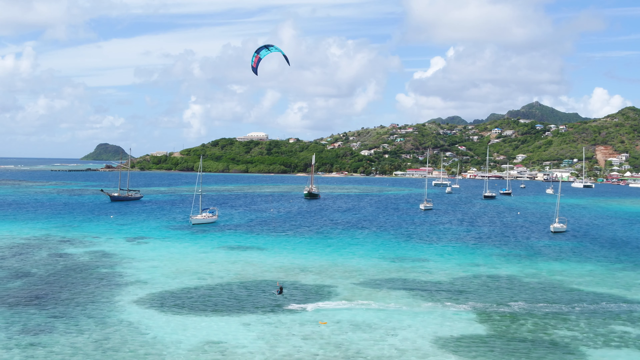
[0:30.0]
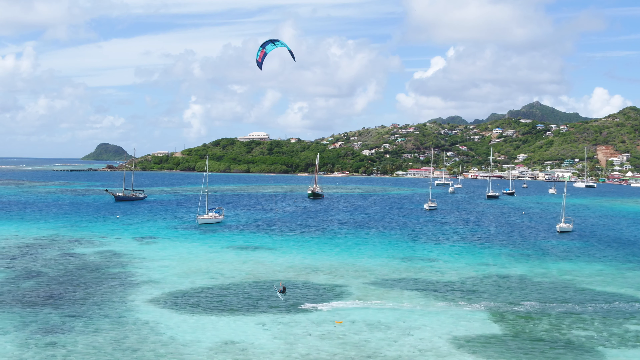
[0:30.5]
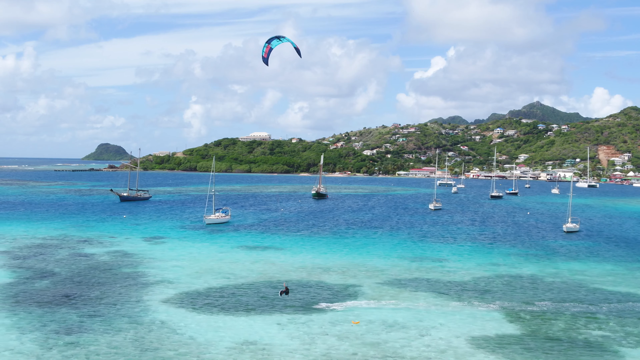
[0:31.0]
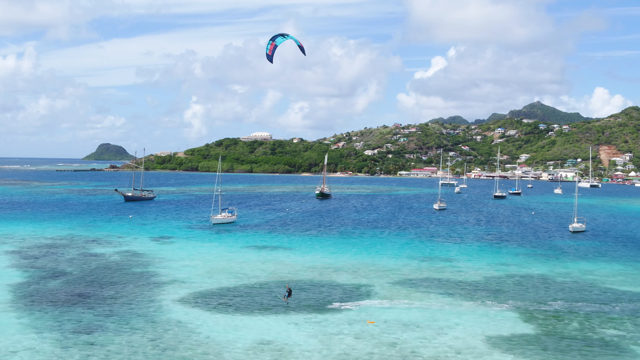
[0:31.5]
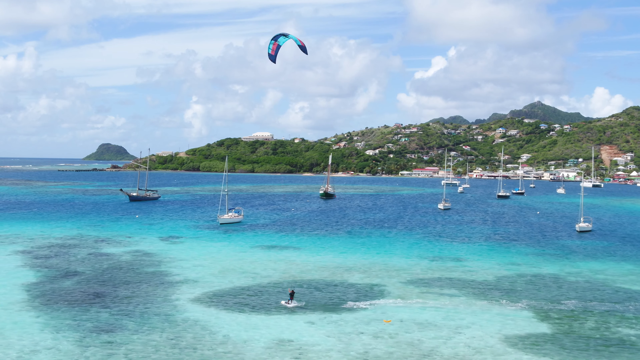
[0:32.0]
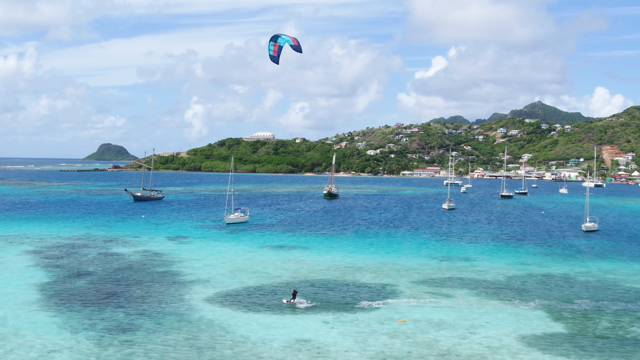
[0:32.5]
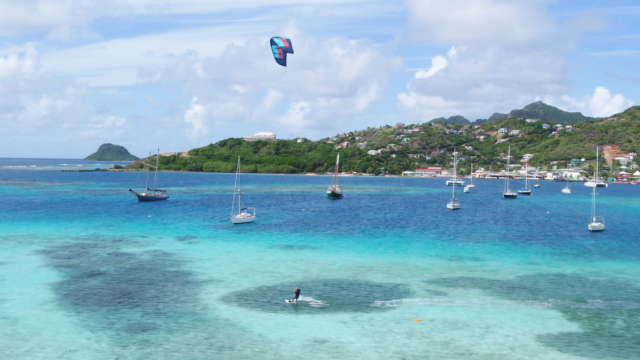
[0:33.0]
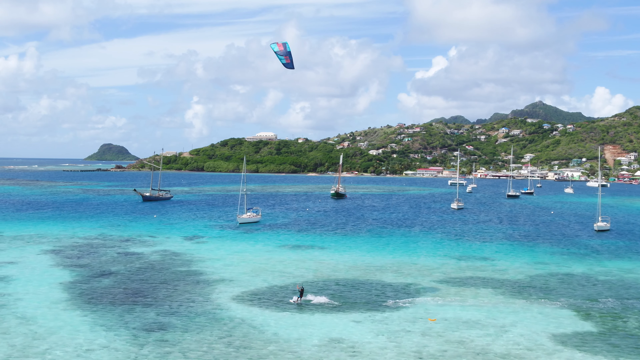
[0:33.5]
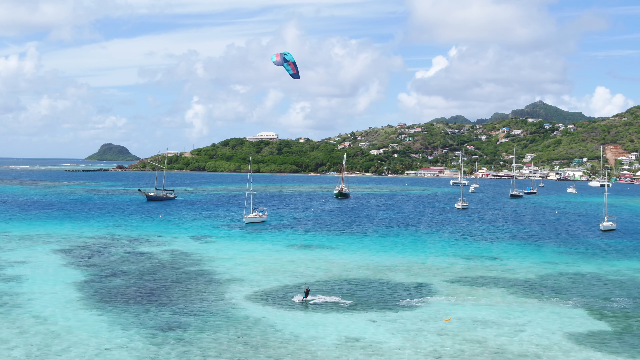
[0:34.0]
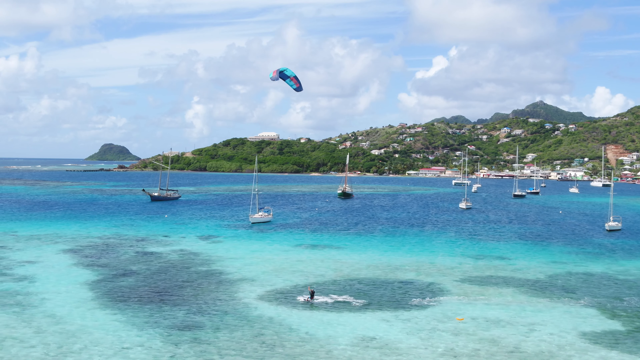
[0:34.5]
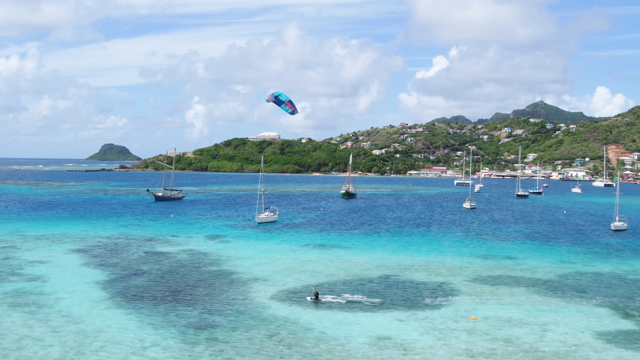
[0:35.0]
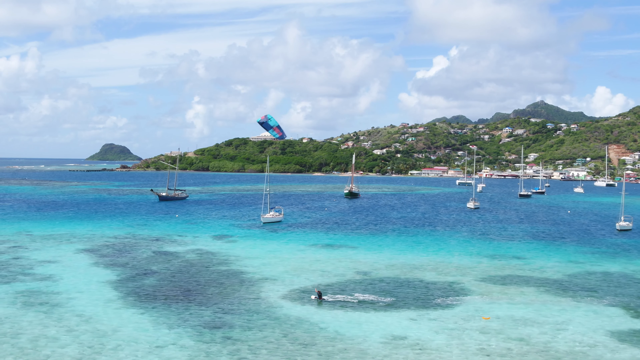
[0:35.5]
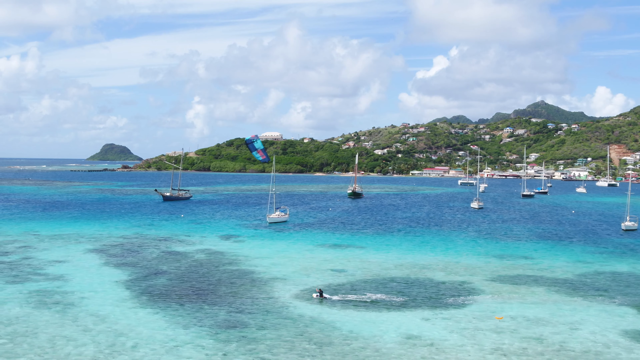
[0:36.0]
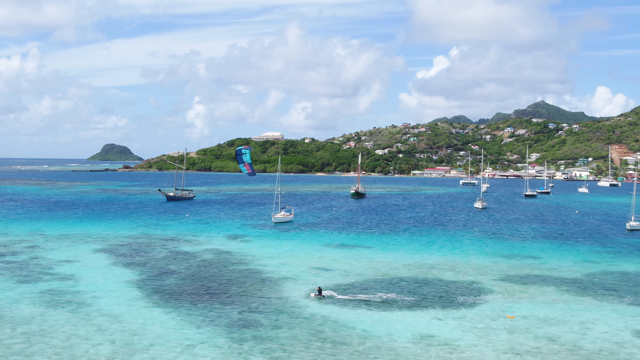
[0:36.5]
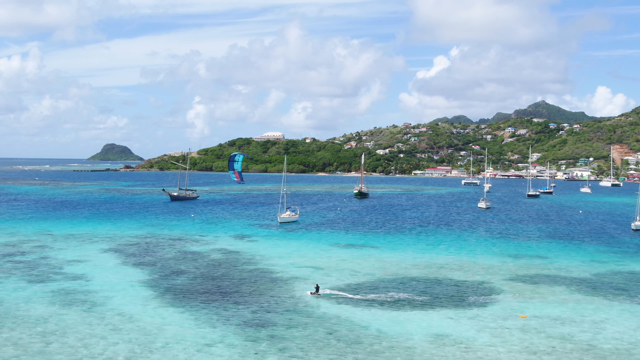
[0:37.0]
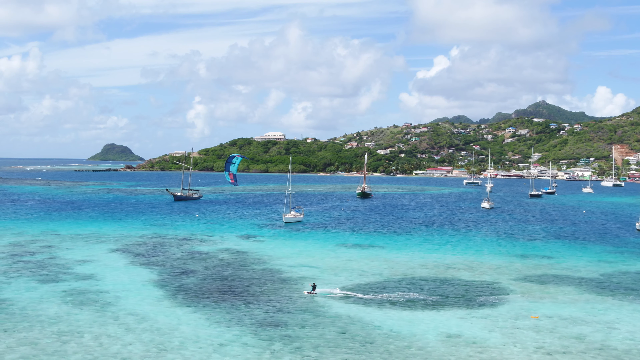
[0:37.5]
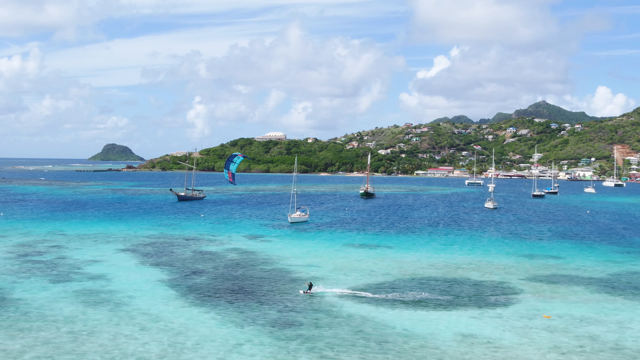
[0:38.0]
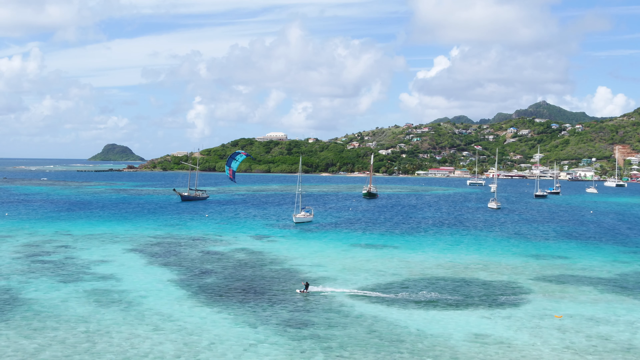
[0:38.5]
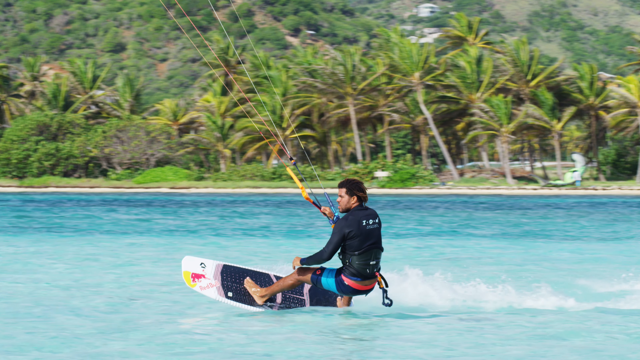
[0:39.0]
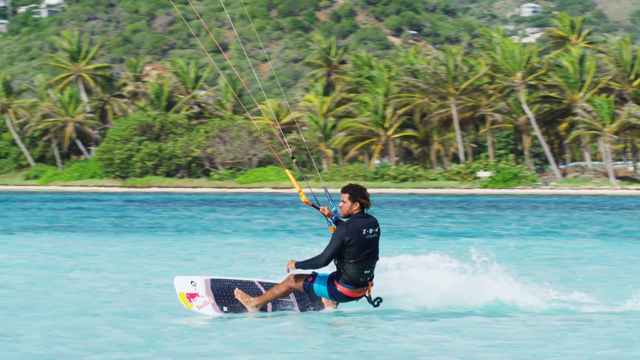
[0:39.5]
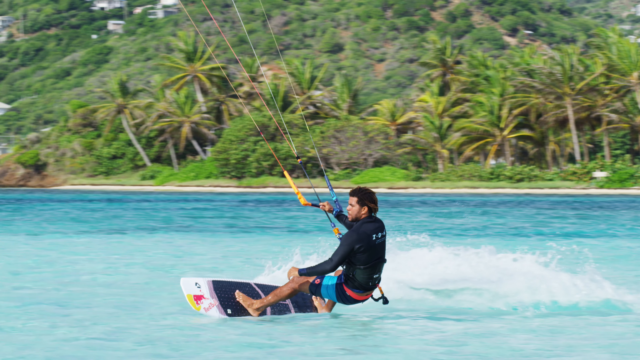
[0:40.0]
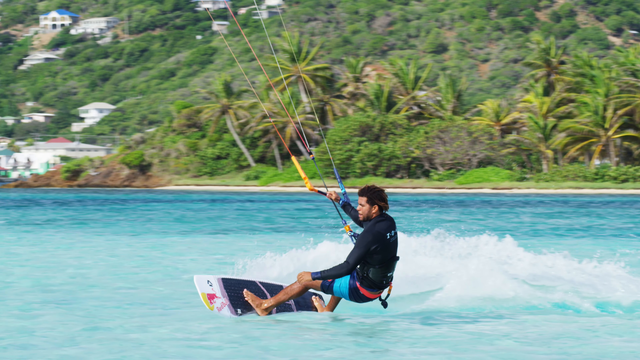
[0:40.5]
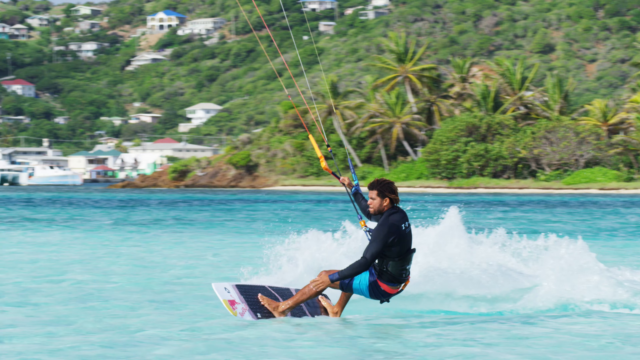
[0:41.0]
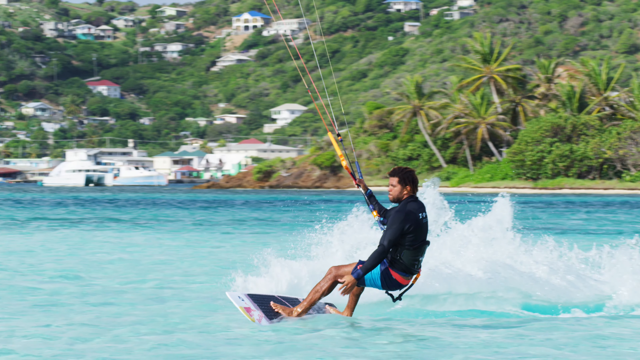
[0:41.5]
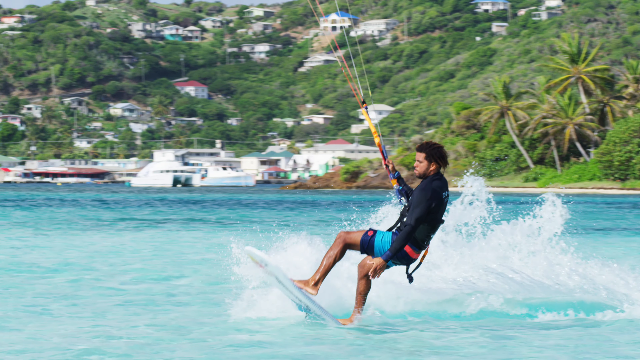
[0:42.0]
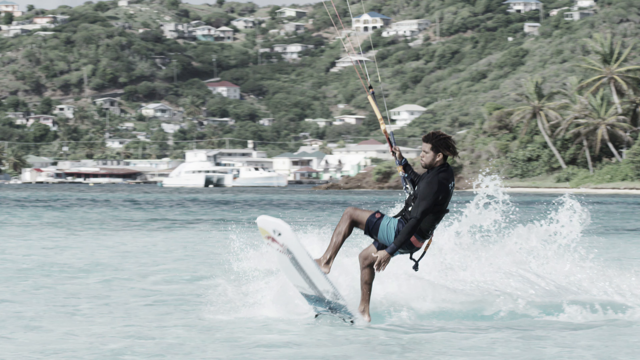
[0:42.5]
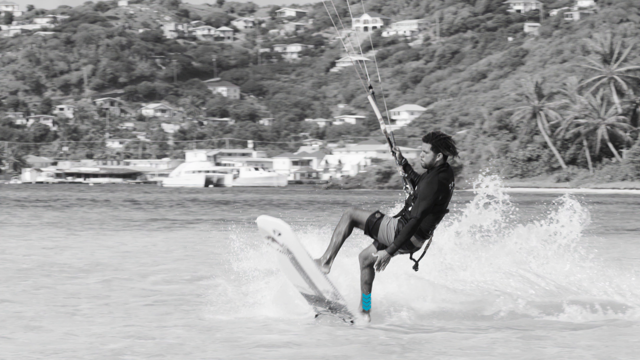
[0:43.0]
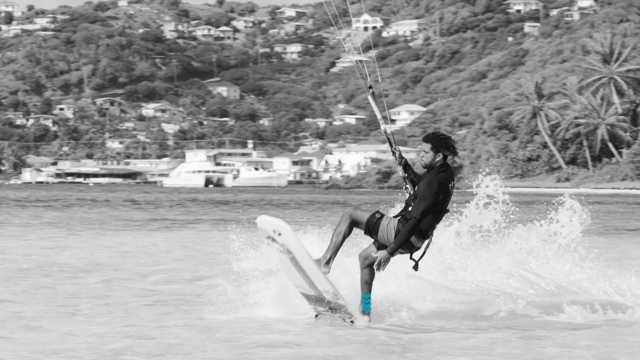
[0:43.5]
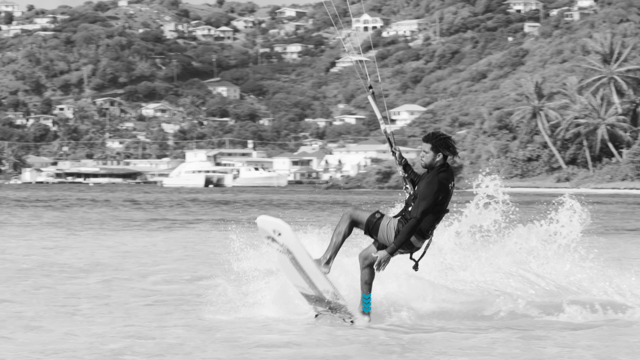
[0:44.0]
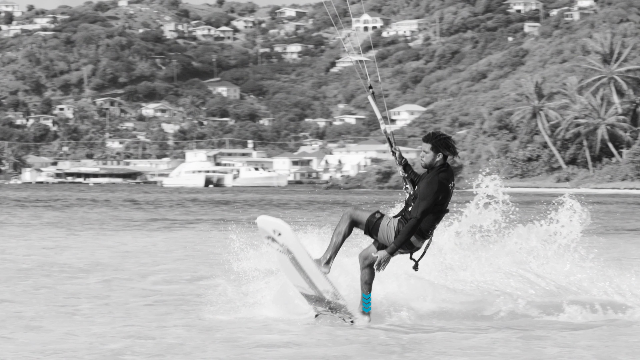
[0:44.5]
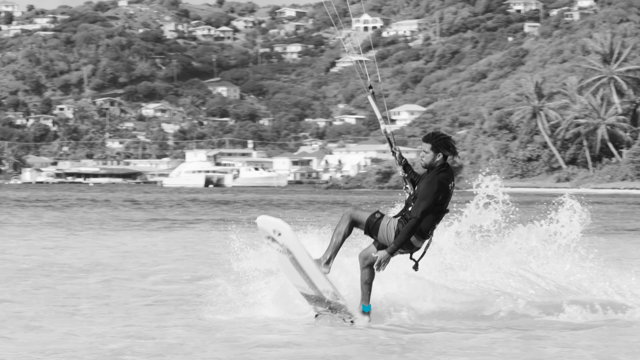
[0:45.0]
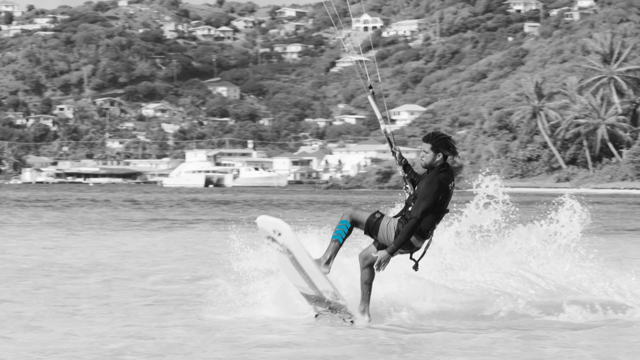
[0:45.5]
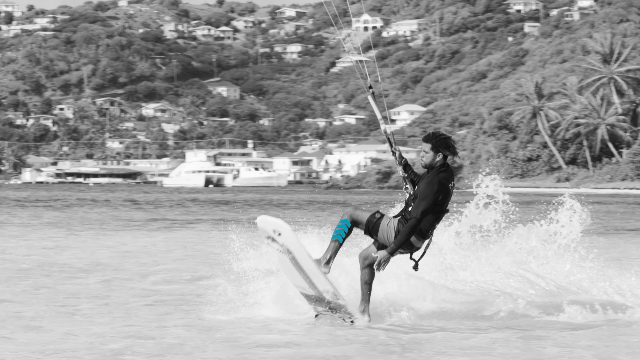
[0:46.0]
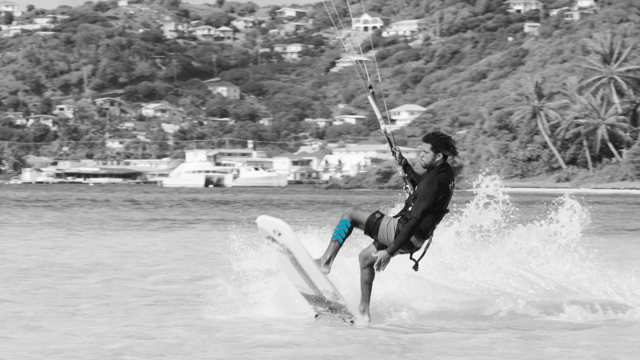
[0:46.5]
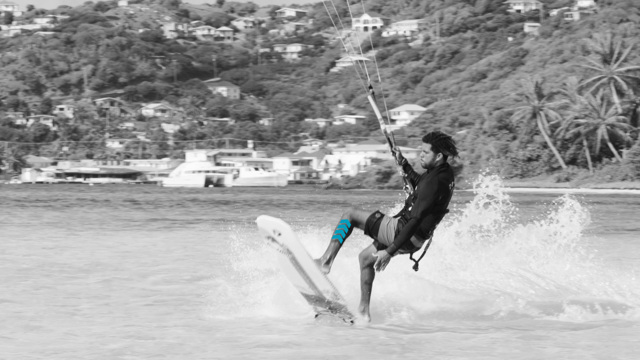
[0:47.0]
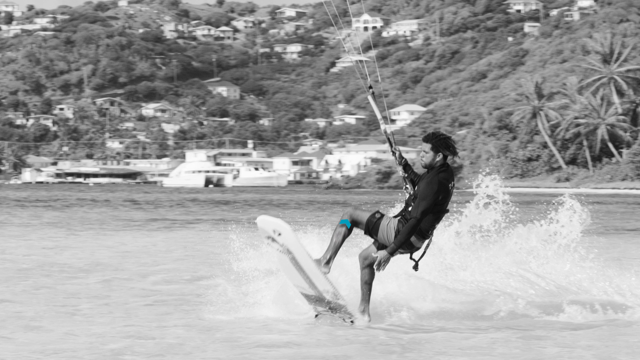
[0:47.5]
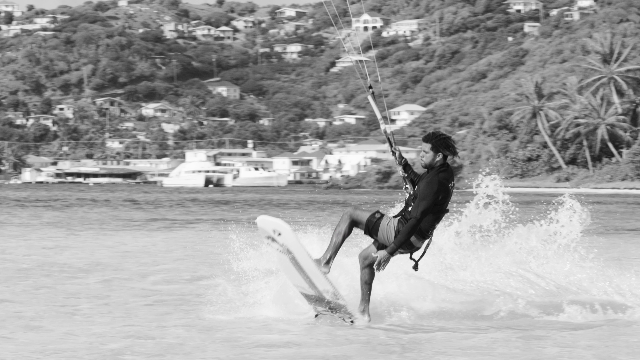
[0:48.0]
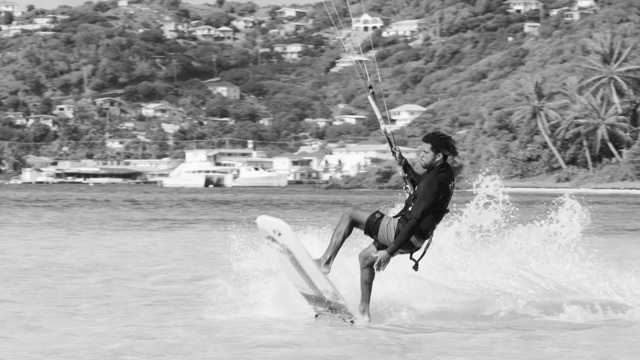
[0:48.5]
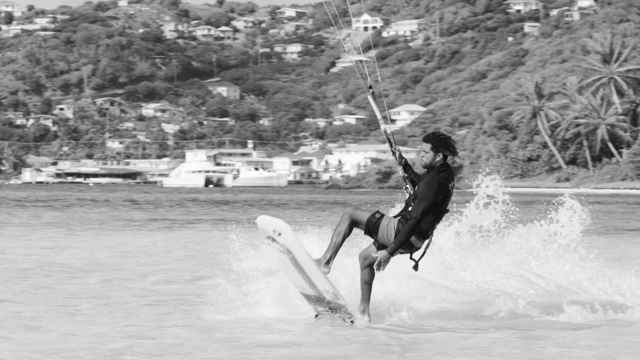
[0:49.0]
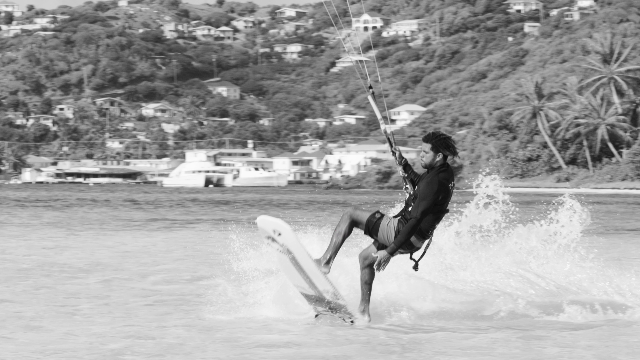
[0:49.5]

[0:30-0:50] Clear bluish-green water stretches out in front of a mountainous, hilly background with green grass on the tops of the mountains or hills and houses up on them. At least six to eight sailboats are spread out in the water. The parachute is visible up in the sky, moving and turning left and right, then it comes down as the view of the board and its rider becomes clearer. The view zooms onto the rider, an African-American man. He is standing on the board, which is lifted up, with one foot on the back and one on the front as the front tilts upward out of the water. One hand is on the bar attached to the parachute and the other is at his side, facing downward. The scene then turns black and white, and arrows pointing upward appear on the man's leg; each arrow is made of at least four connected points, and then they disappear.